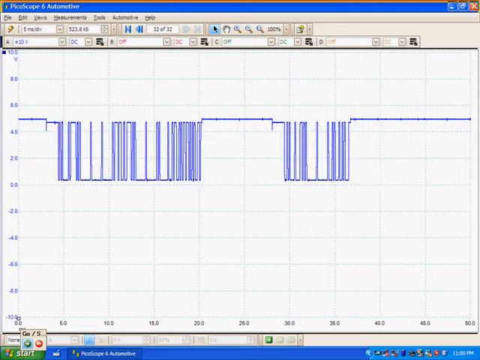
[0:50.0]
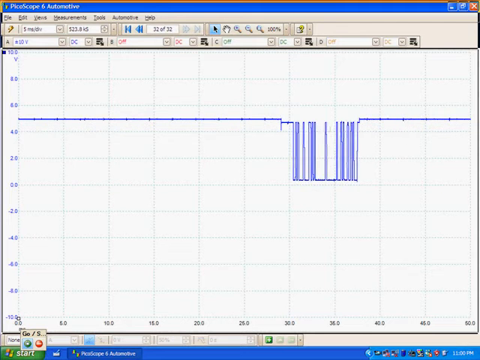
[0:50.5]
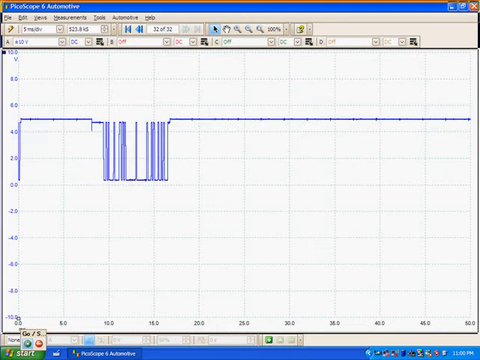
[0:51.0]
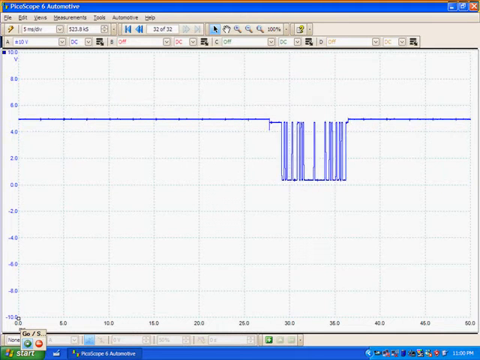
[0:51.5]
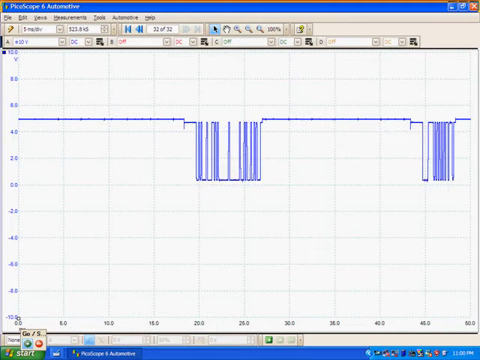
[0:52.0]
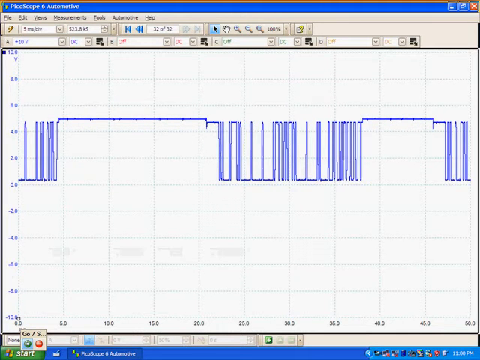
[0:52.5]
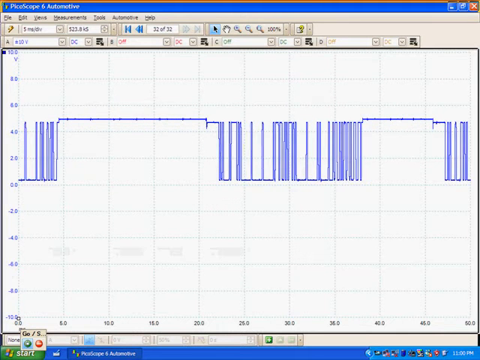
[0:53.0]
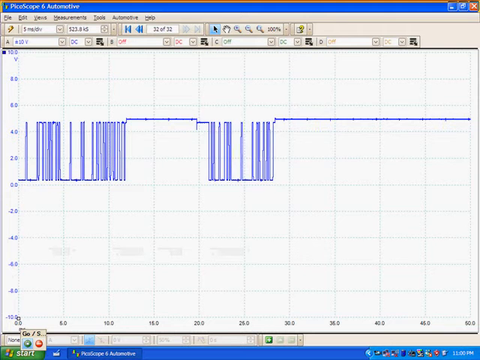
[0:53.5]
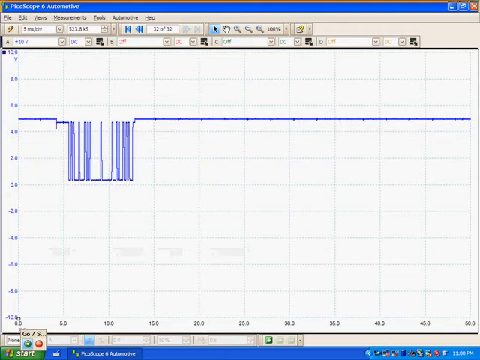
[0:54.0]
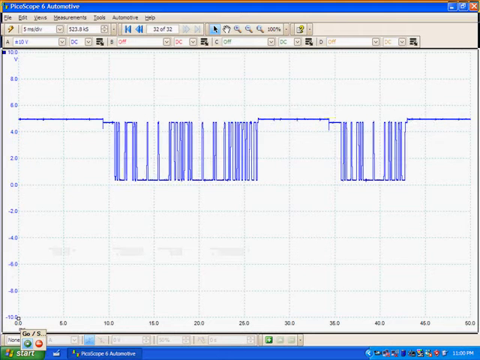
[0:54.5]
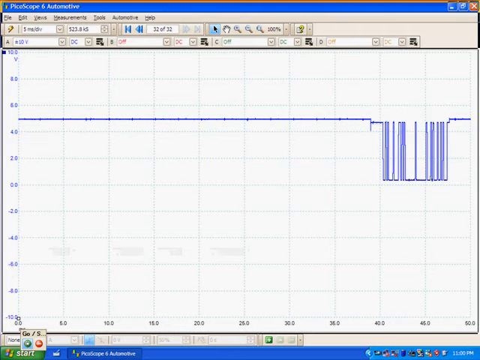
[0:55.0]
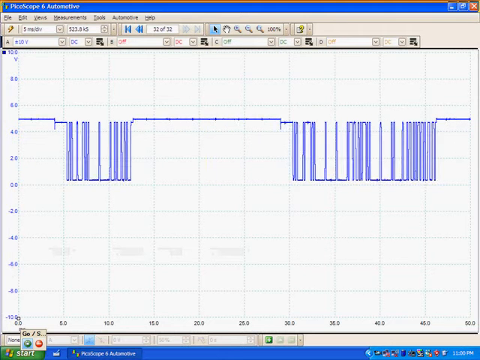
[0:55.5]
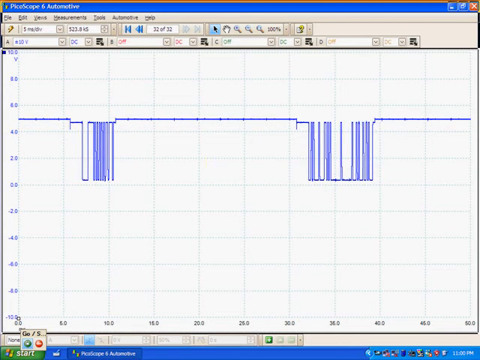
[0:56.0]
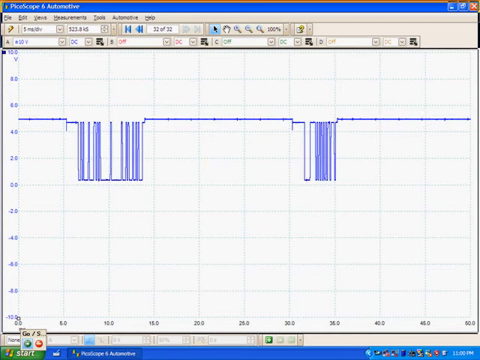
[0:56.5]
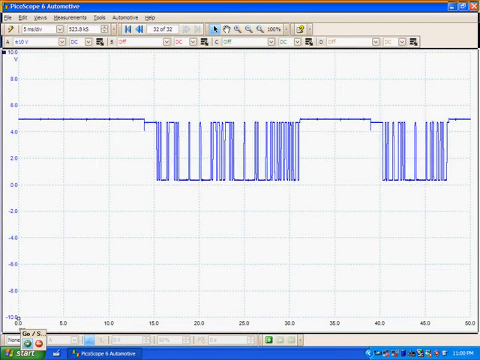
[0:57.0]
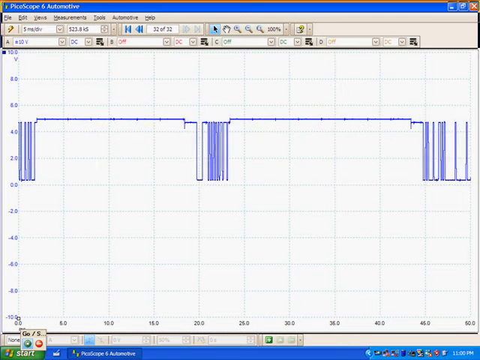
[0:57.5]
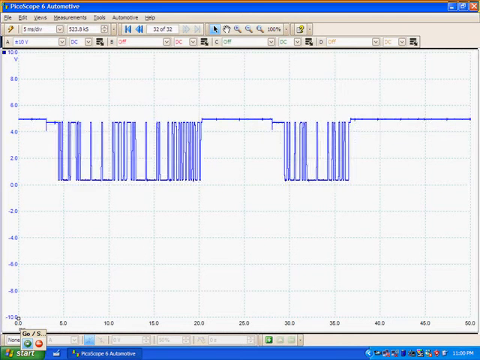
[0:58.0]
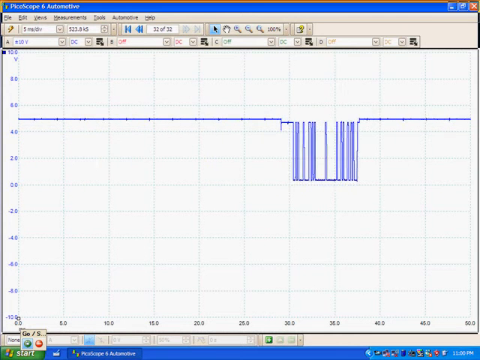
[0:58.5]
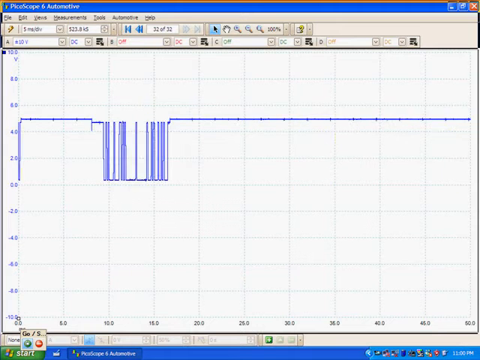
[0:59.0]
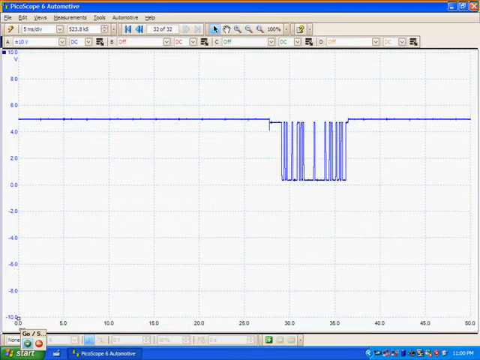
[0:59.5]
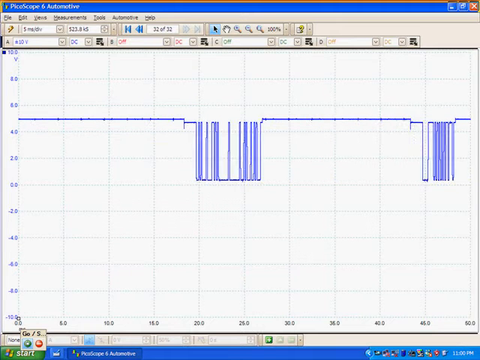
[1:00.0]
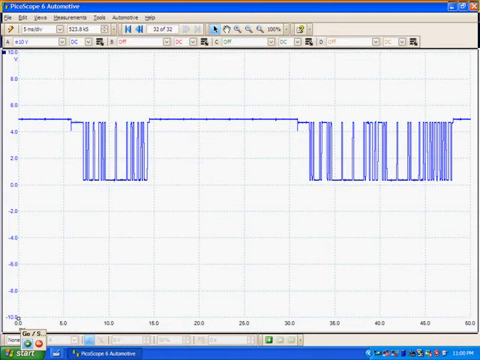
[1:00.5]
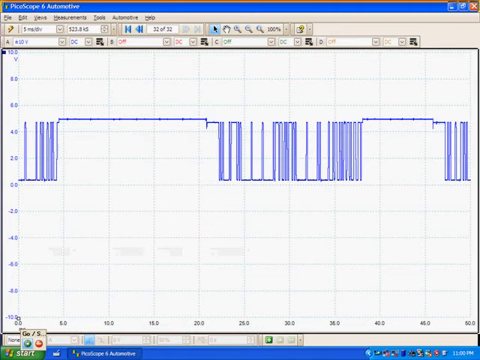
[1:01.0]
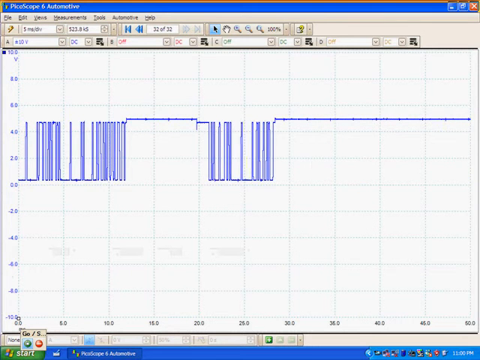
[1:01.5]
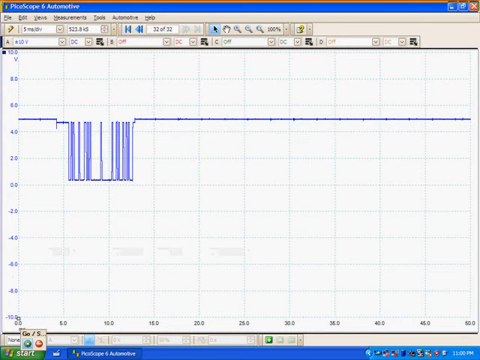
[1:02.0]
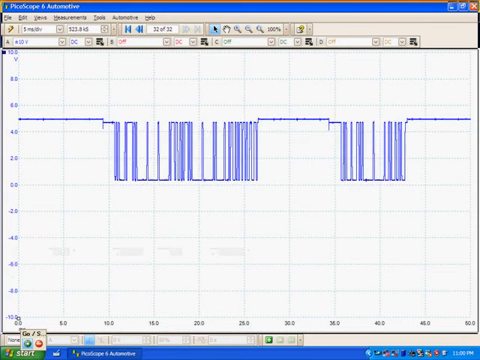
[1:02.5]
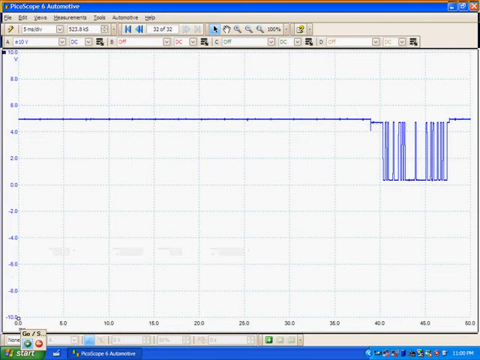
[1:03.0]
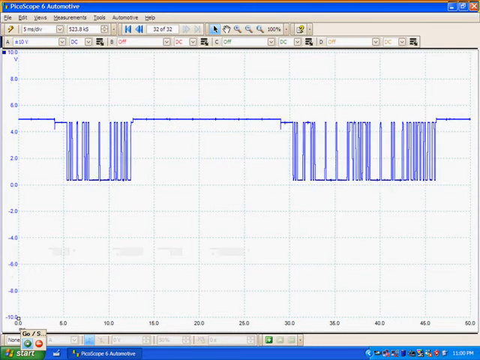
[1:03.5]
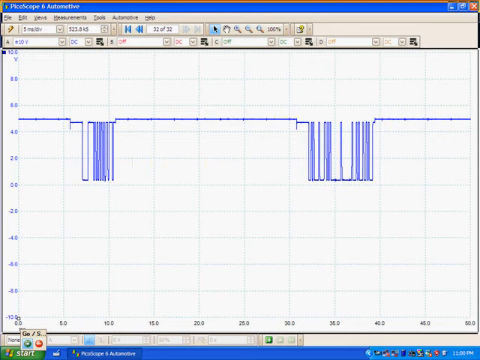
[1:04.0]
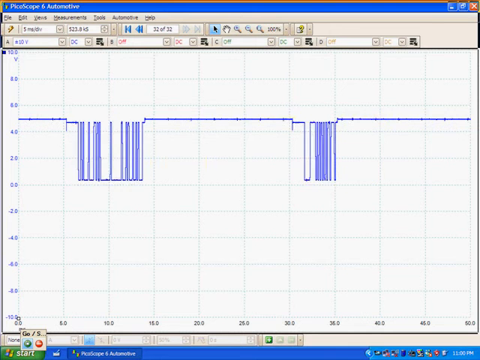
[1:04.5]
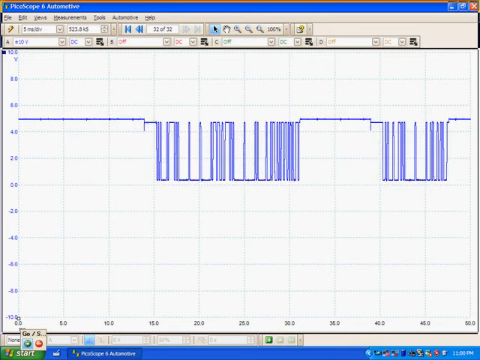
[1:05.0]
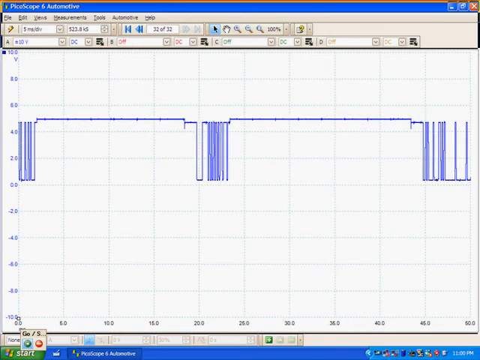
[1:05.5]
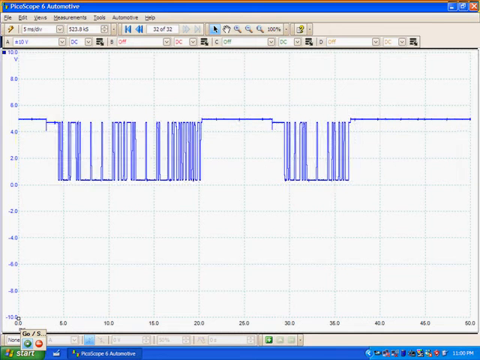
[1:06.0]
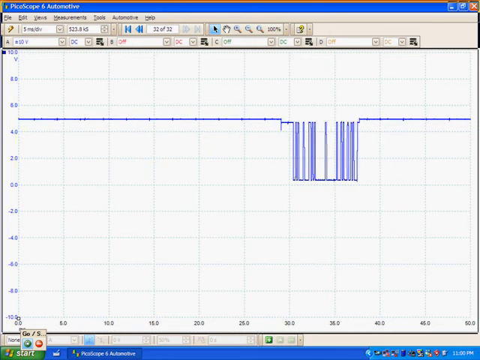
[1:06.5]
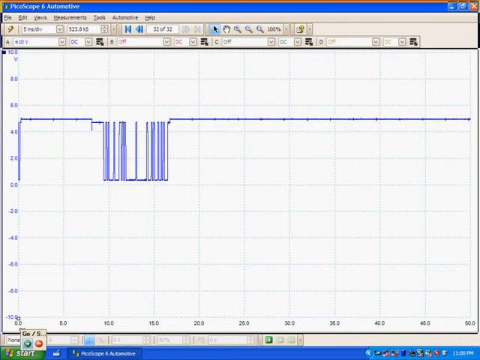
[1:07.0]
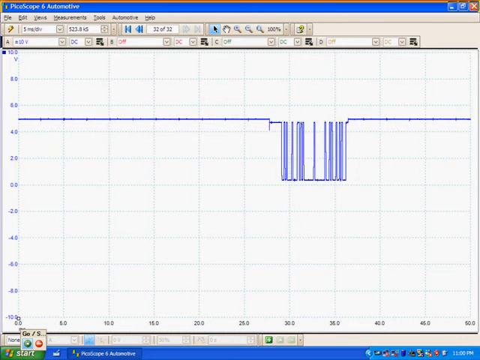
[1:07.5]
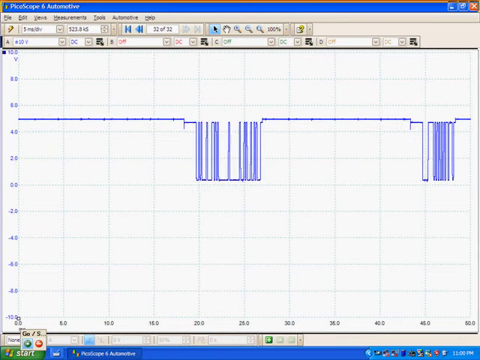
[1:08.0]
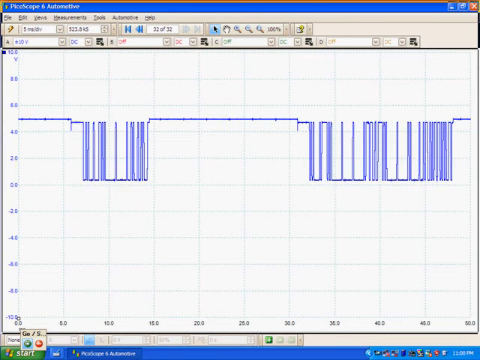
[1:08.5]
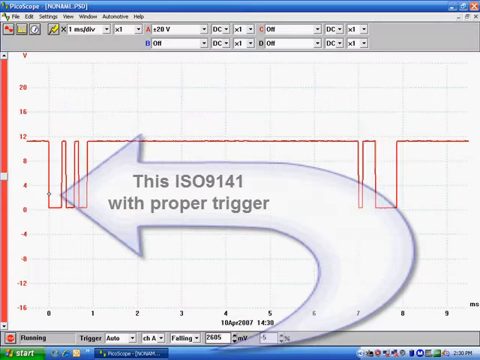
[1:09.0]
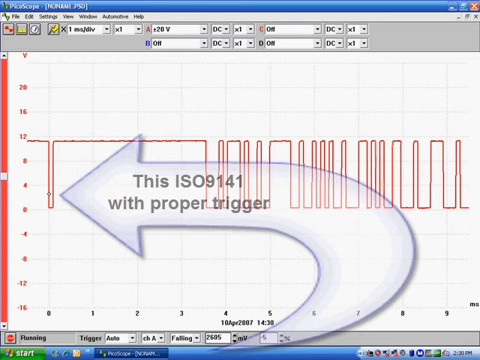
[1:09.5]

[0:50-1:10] On the Windows computer, the program shows a chart with blue lines running from left to right, and the chart appears to be manipulated to move from right to left. Several overlays over the chart explain different areas of it. The title at the top reads PicoScope 6 Automotive. The menu options at the top left of the window are File, Edit, Views, Measurements, Tools, Automotive, and Help, the Automotive menu indicating the program is probably designed for automobile professionals. The graph in the center of the screen is of something unidentified, with horizontal and vertical blue lines that go across, down, and up all across the middle of the chart.